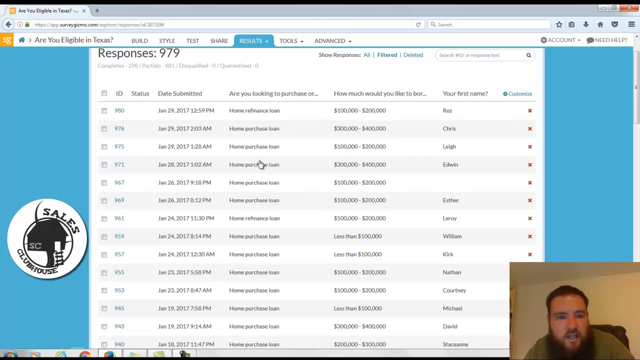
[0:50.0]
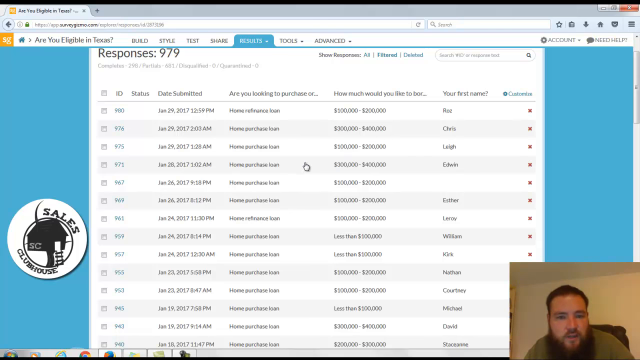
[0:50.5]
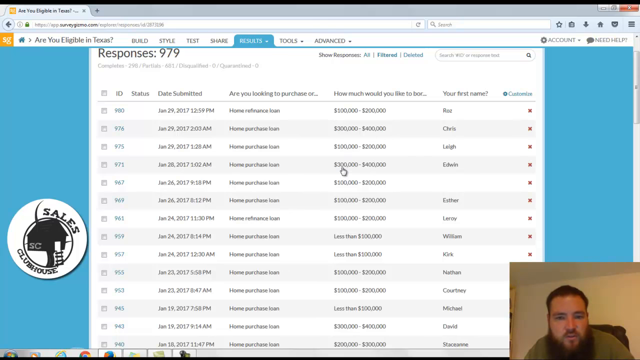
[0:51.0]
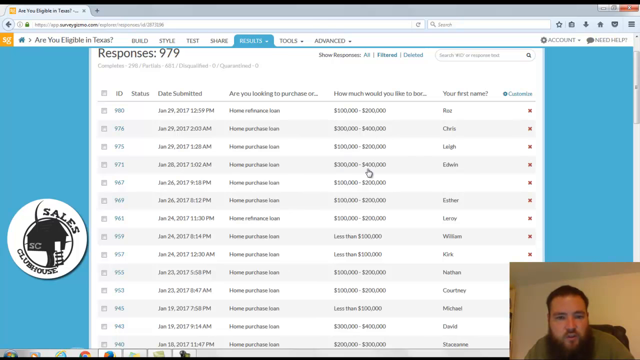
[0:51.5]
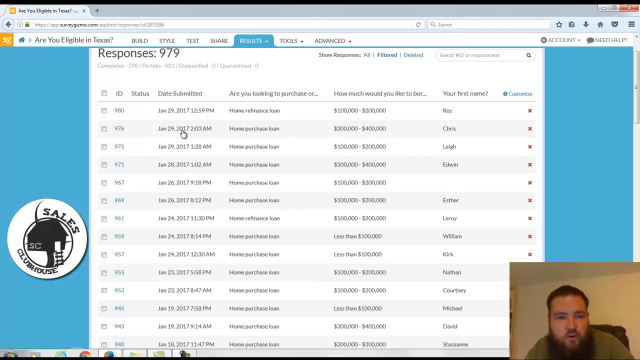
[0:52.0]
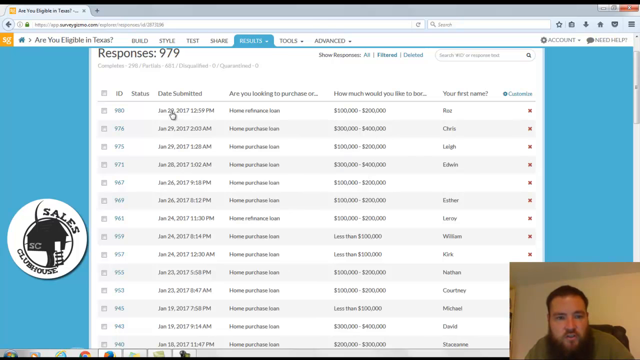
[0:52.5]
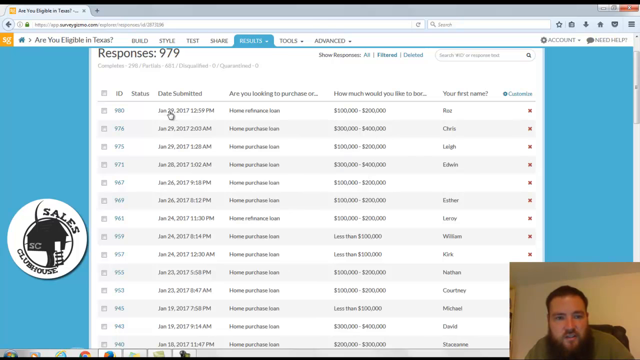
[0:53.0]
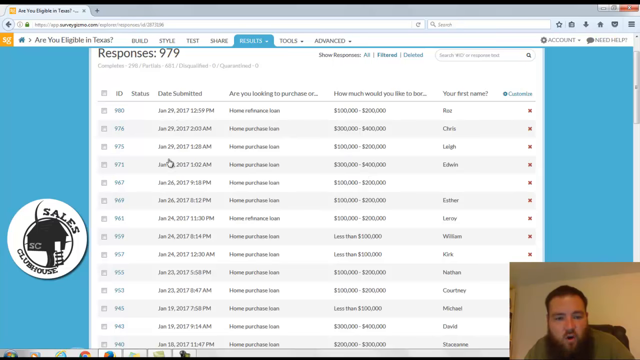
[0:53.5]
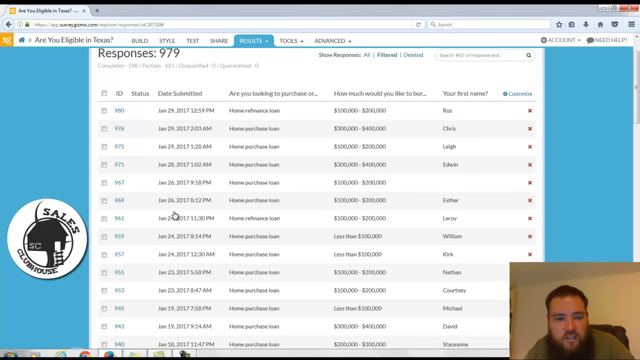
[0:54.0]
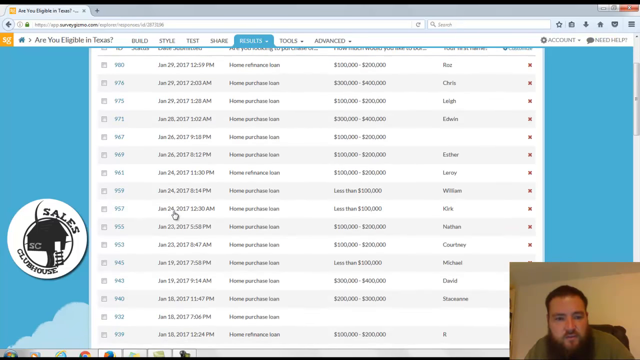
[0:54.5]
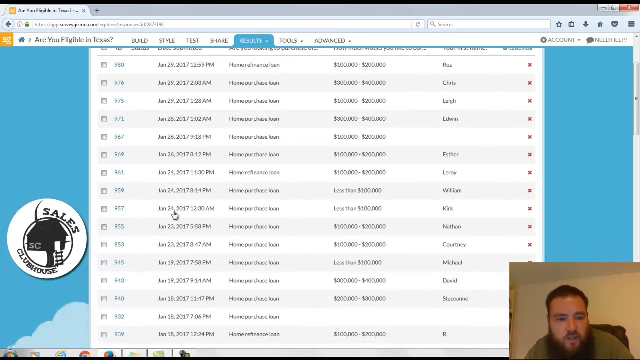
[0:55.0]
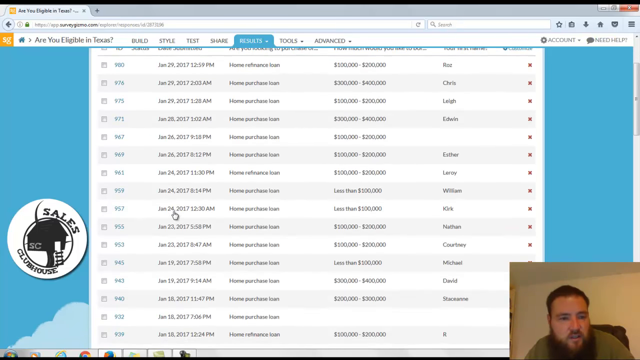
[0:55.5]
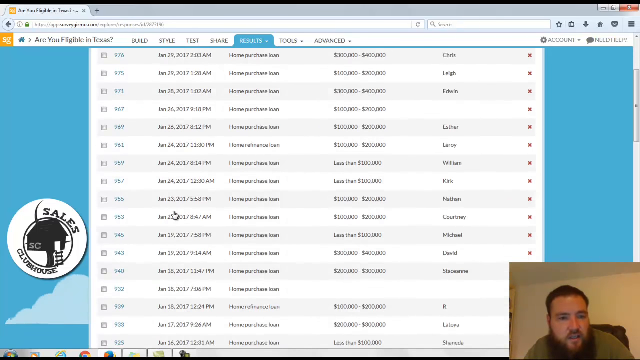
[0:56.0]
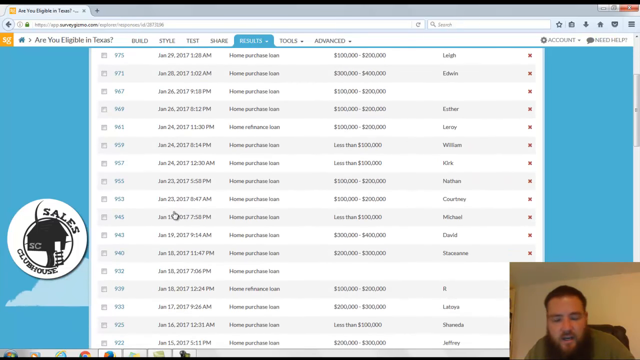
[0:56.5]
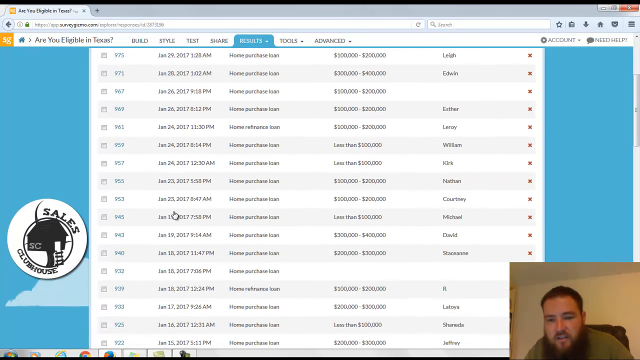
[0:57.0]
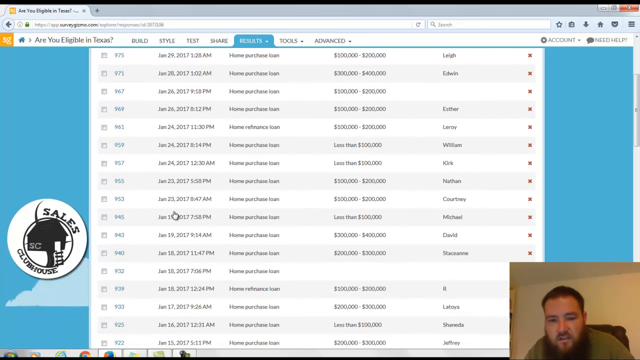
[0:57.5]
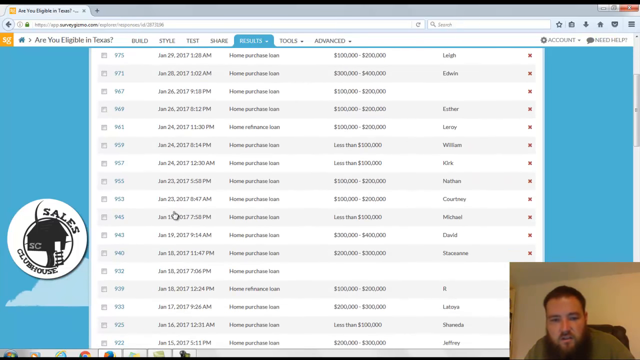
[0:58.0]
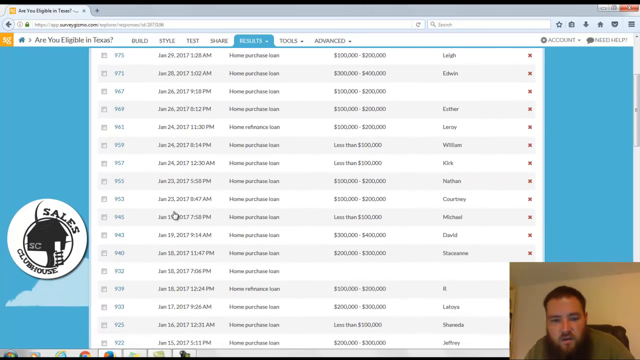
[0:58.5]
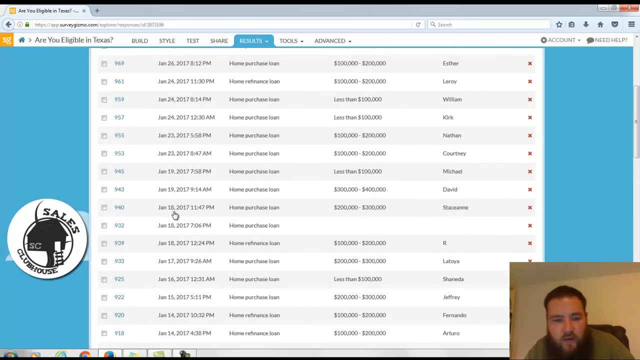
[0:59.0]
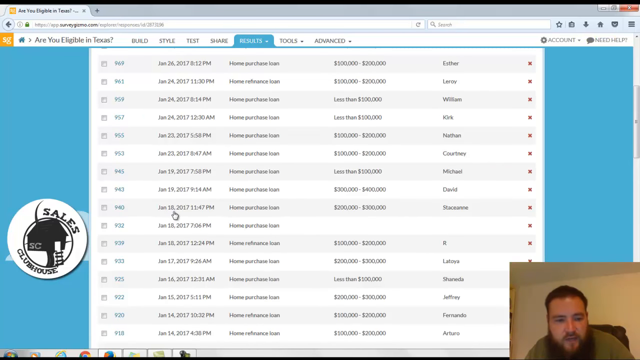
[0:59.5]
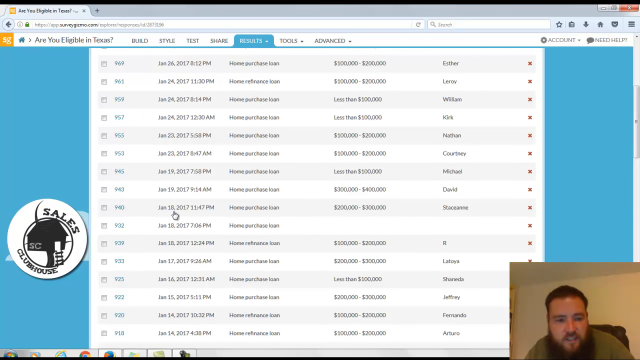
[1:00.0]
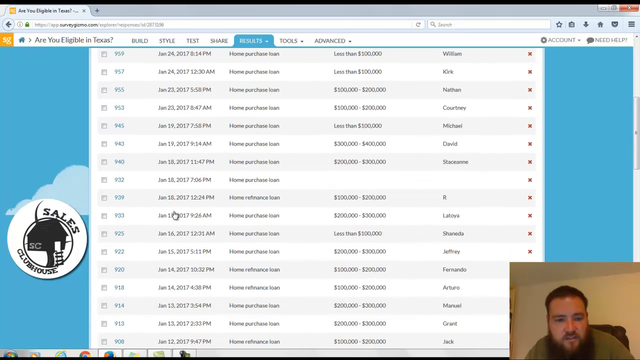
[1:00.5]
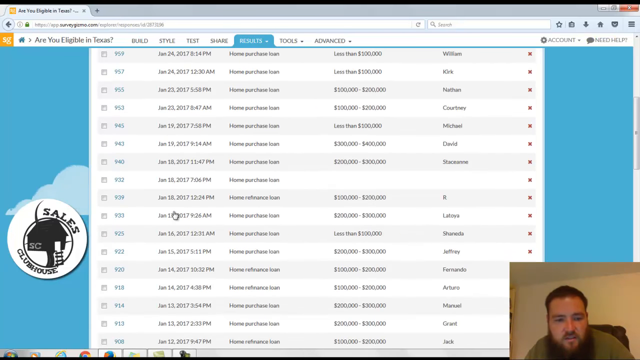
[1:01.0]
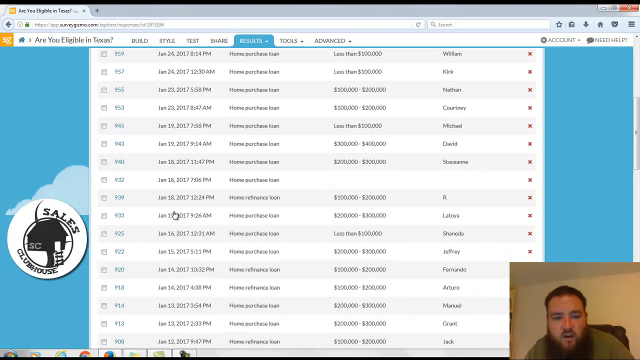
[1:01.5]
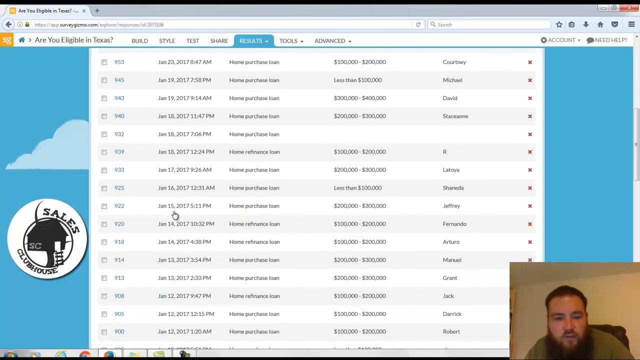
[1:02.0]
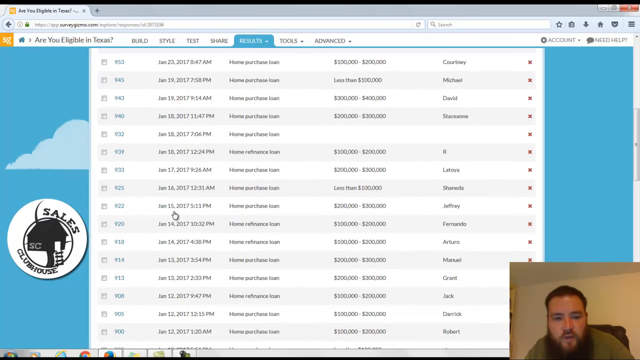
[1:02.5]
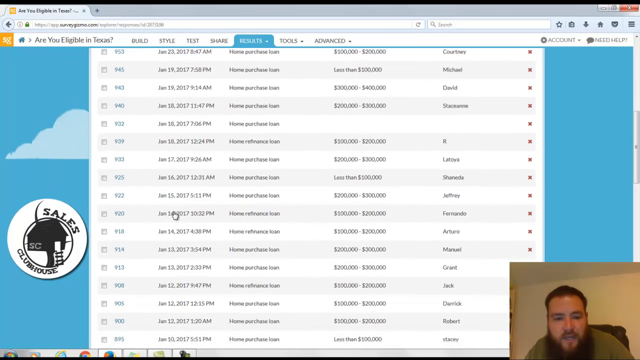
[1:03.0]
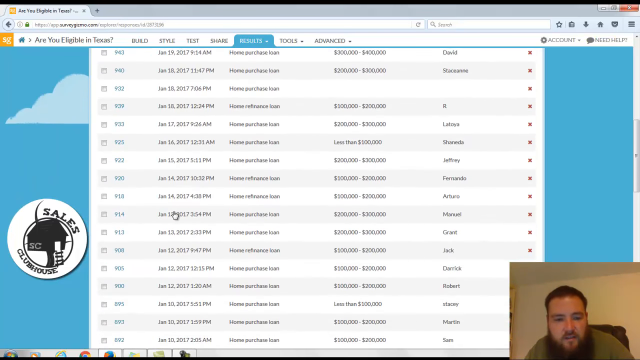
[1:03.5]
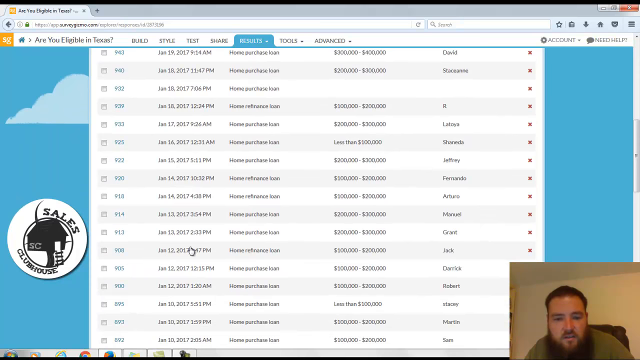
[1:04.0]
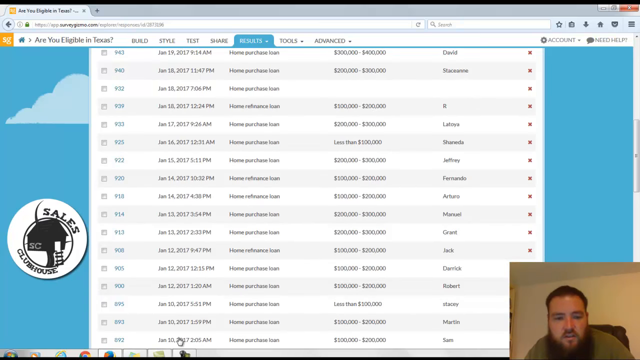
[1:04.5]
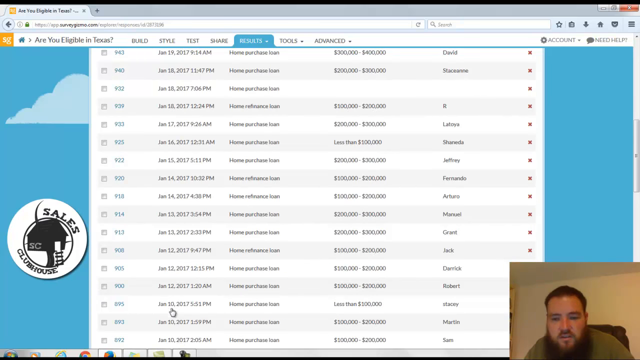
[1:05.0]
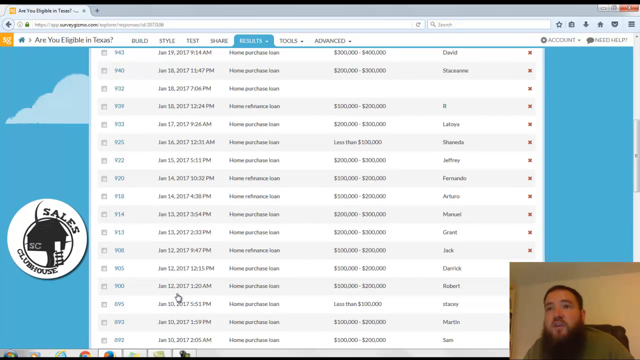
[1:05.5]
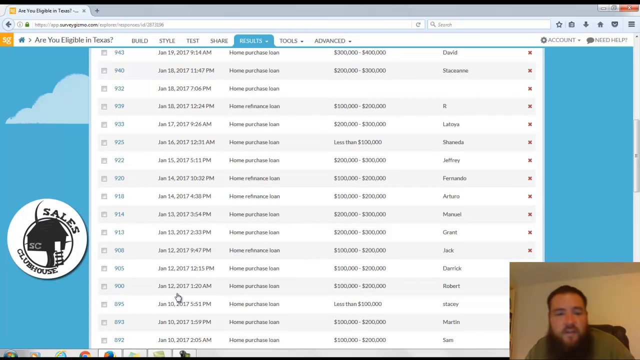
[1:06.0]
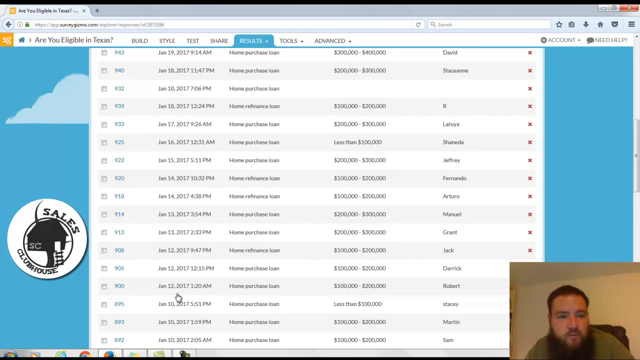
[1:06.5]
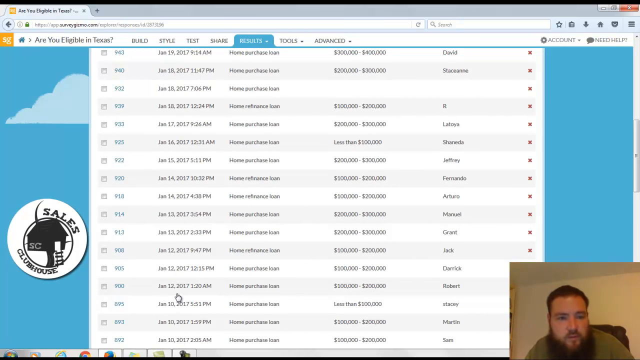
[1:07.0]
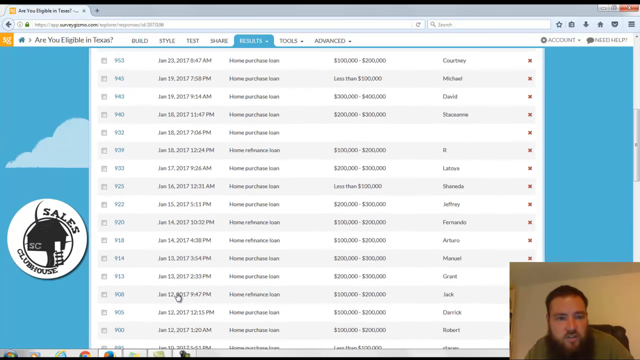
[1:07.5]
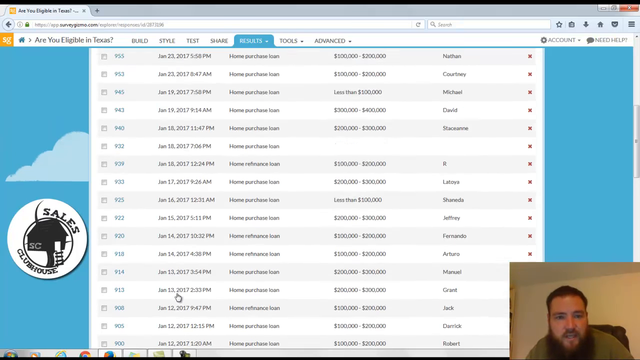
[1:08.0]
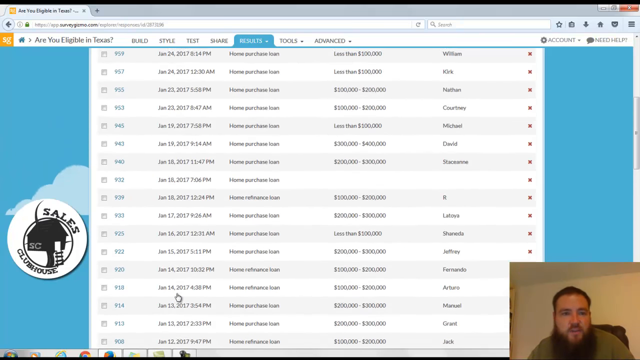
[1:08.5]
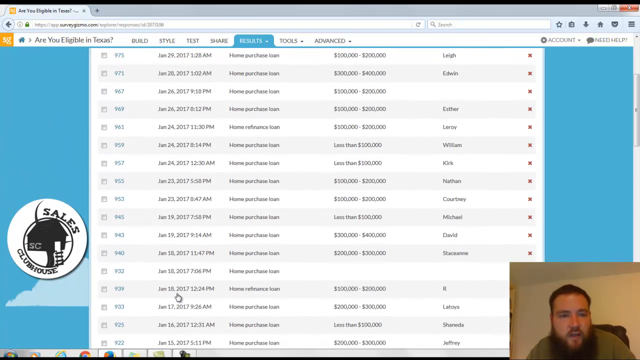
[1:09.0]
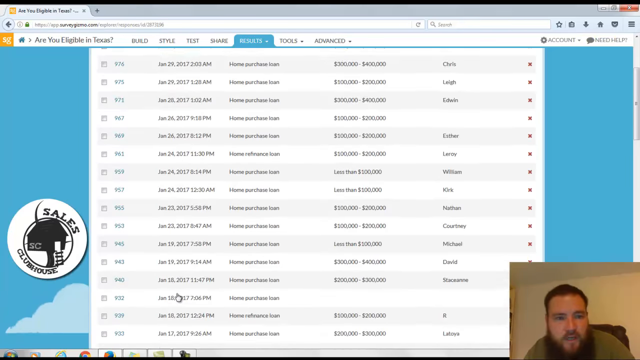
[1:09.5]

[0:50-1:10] A website is shown with "are you eligible in Texas?" at the top left and a white table full of black text below. The table has five columns headed "ID", "date submitted", "are you looking to purchase or...", "how much would you like to borrow..." and "your first name". At the bottom right is a streamer overlay of a man who appears to be talking while looking down at his monitor: a Caucasian man with short hair and what looks like a very long, thick beard, wearing a pale green shirt and sitting on a black computer chair. He appears to talk the whole time, and his mouse cursor moves throughout. First he looks at the amount "300,000 to 400,000" in the fourth row of the how much would you like to borrow column. He then moves to the date submitted column, starting from January 29th, and scrolls down while talking, past dates that seem to read "January 23rd, 2017" and "January 18th, 2017", then January 15th, January 13th and January 10th. He moves his mouse over January 12th and then scrolls all the way back up to the top of the website.